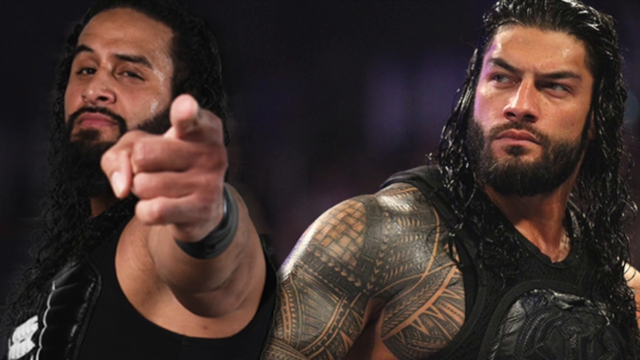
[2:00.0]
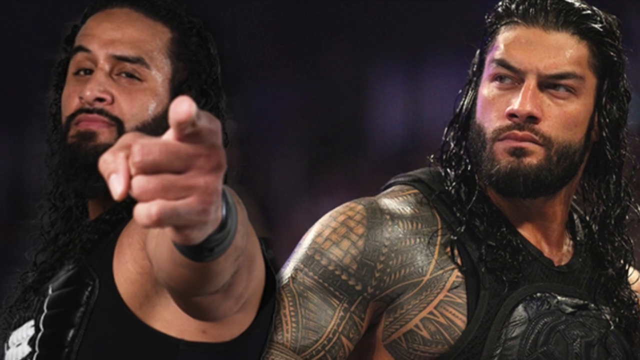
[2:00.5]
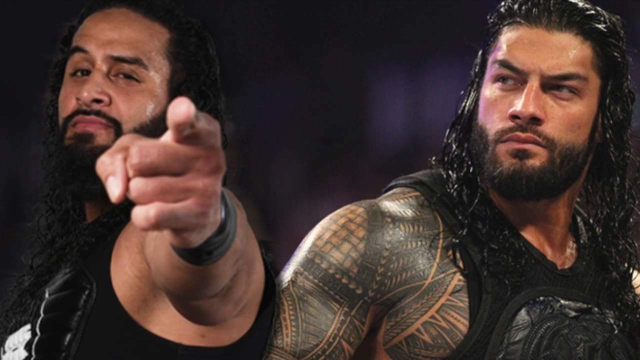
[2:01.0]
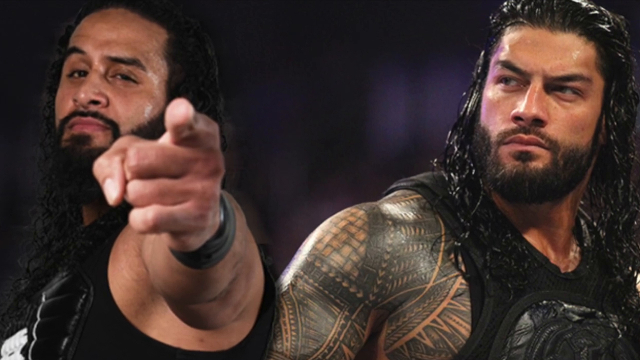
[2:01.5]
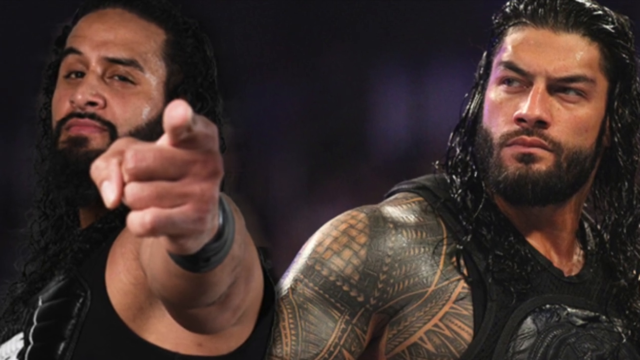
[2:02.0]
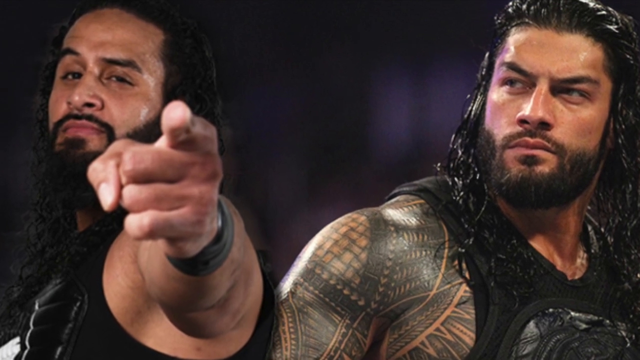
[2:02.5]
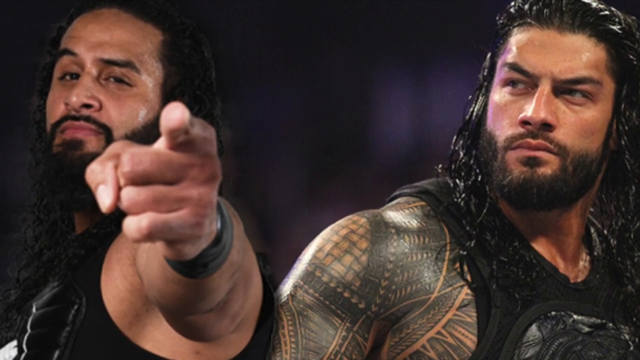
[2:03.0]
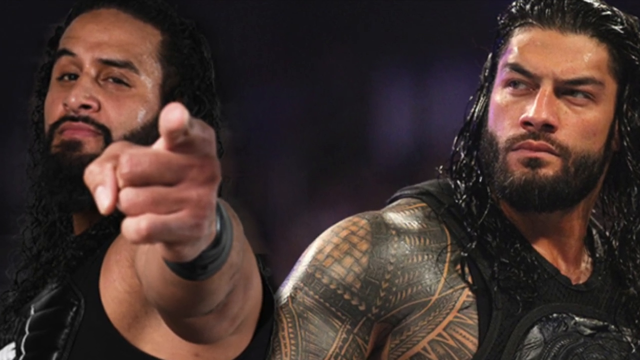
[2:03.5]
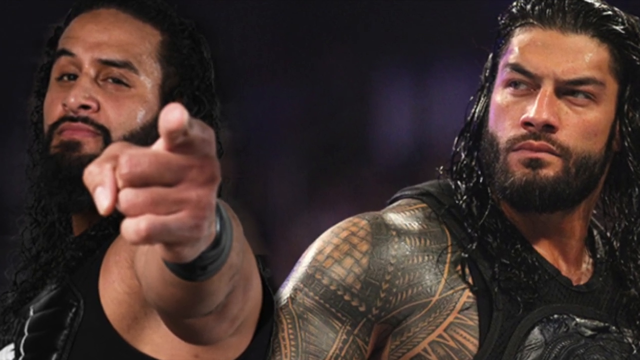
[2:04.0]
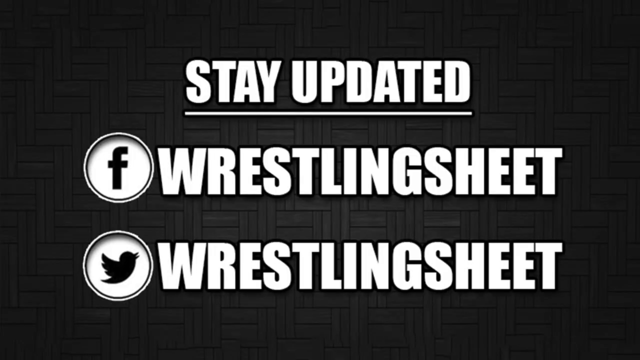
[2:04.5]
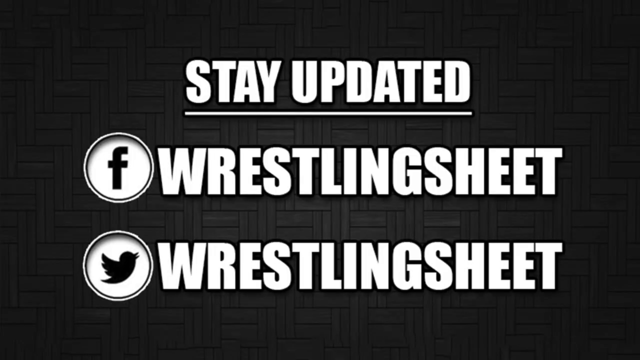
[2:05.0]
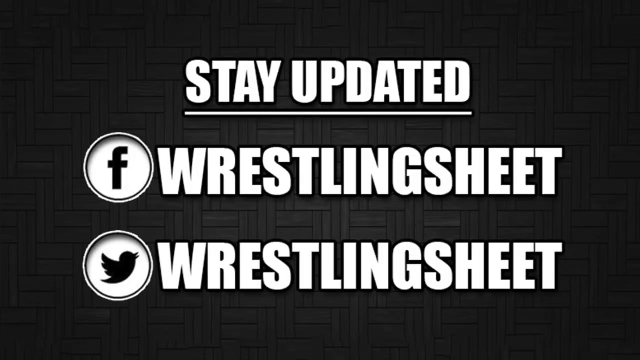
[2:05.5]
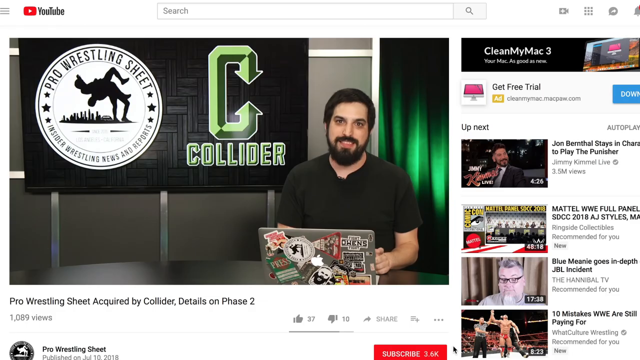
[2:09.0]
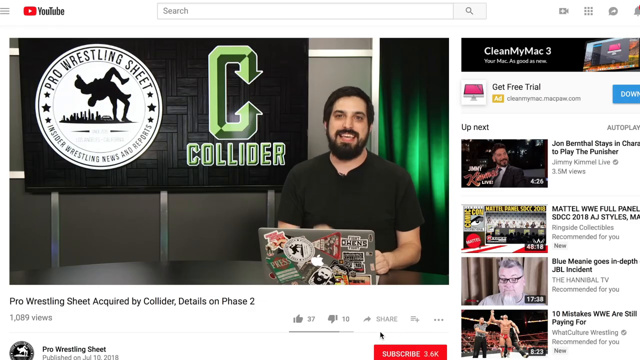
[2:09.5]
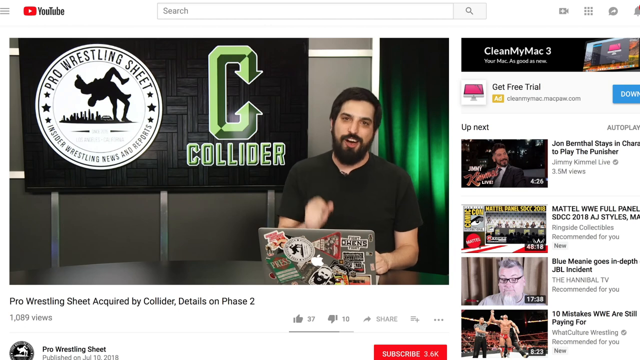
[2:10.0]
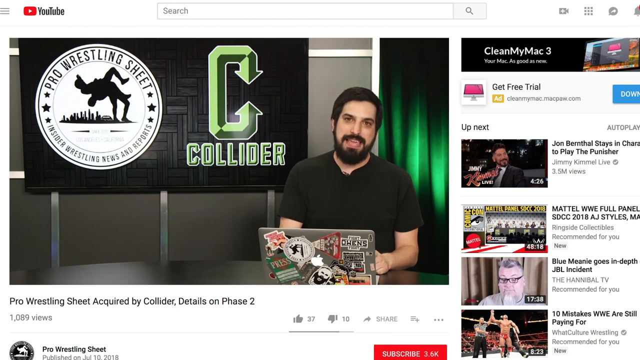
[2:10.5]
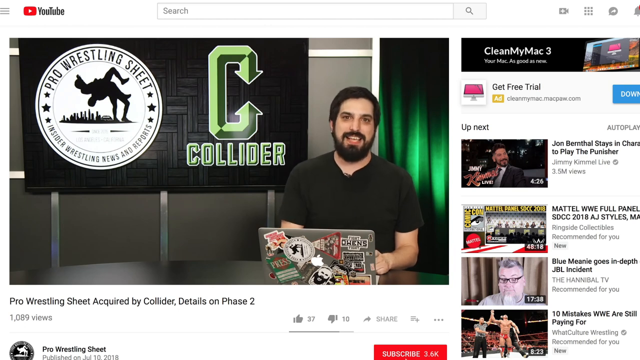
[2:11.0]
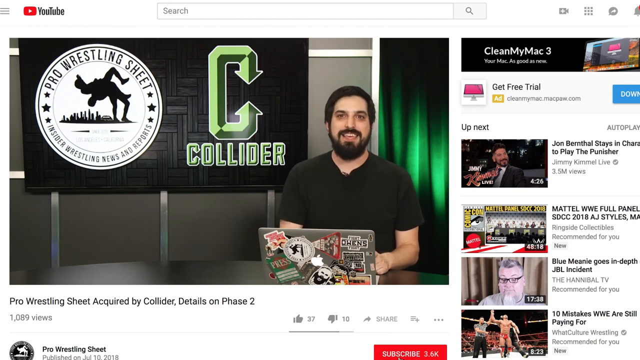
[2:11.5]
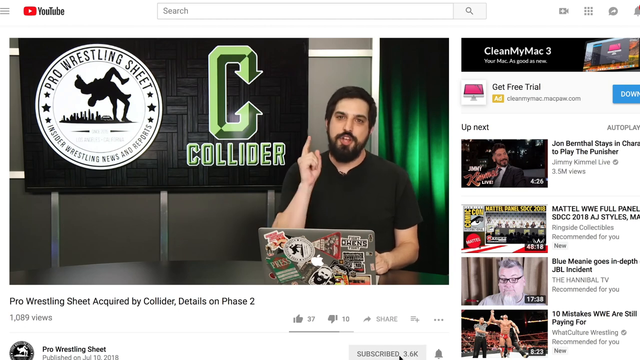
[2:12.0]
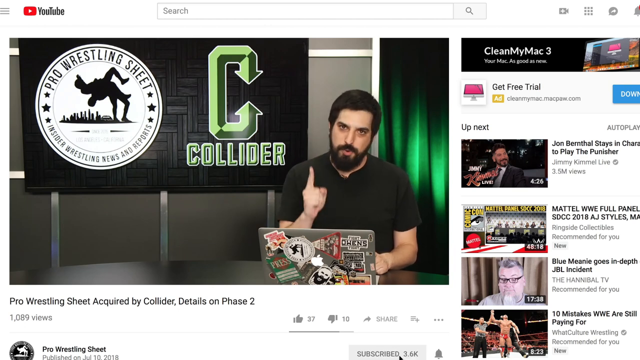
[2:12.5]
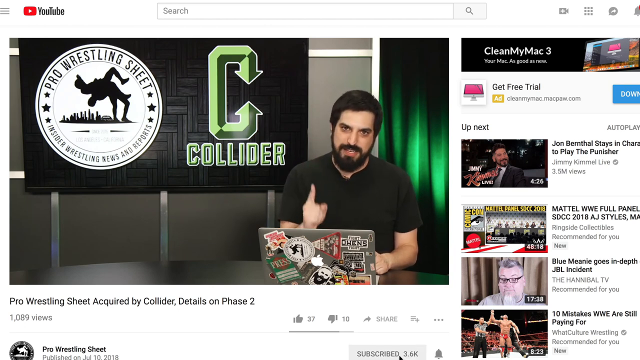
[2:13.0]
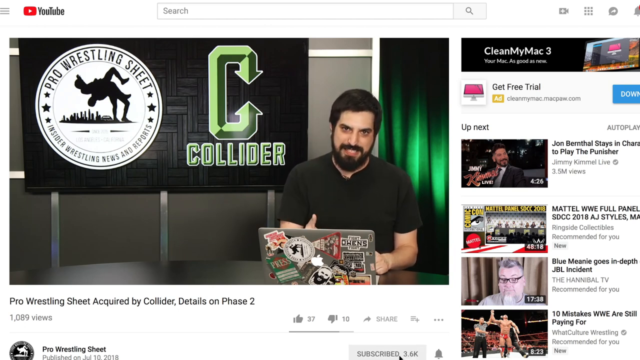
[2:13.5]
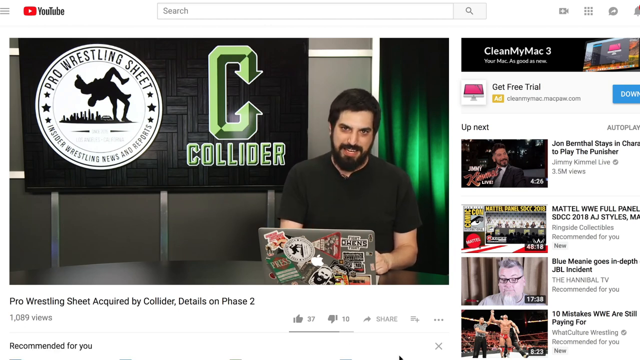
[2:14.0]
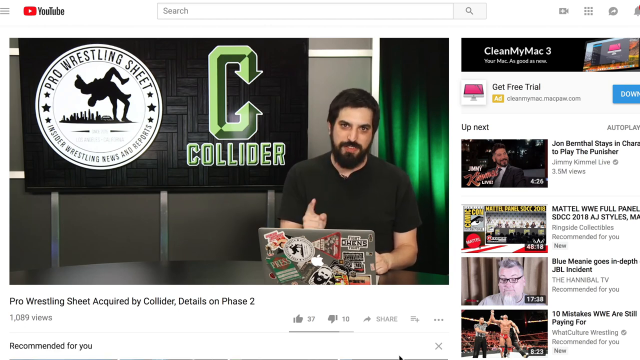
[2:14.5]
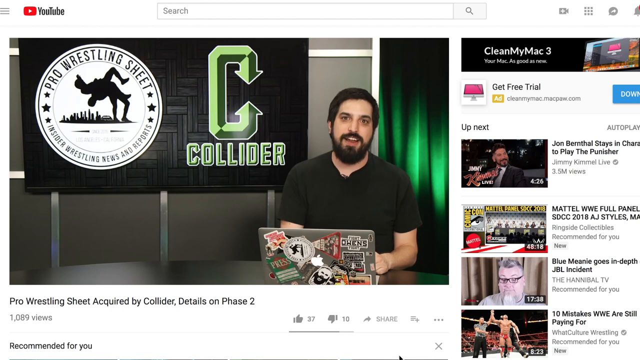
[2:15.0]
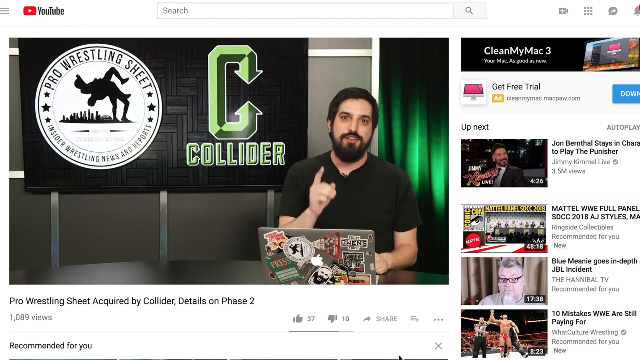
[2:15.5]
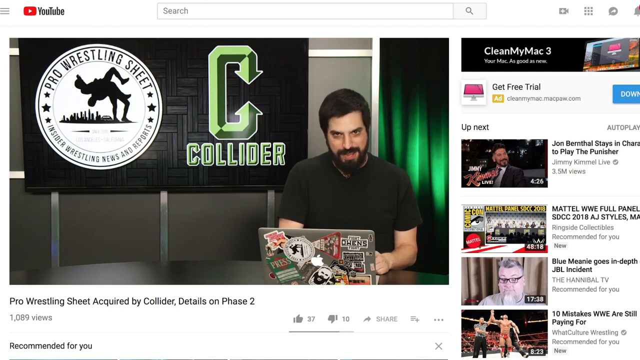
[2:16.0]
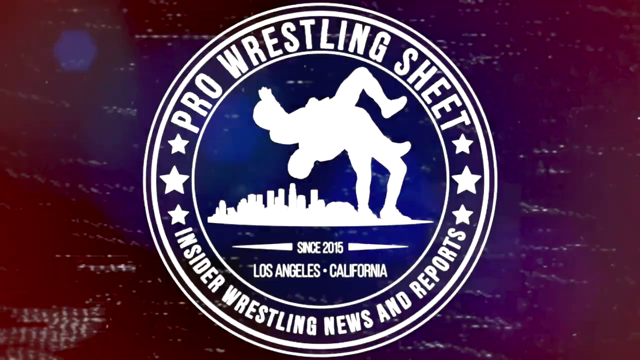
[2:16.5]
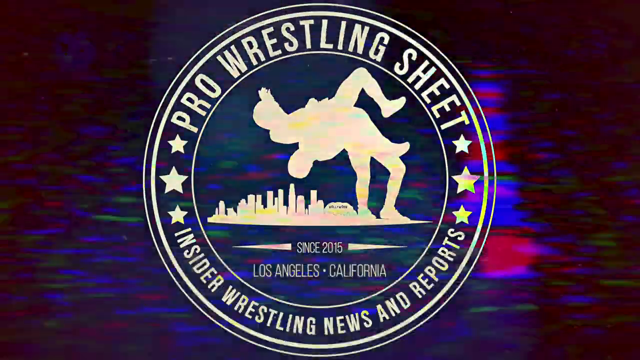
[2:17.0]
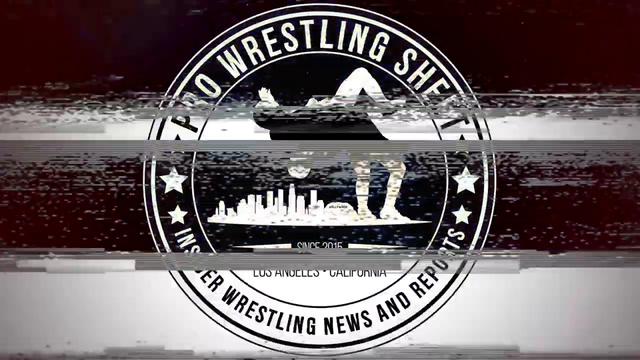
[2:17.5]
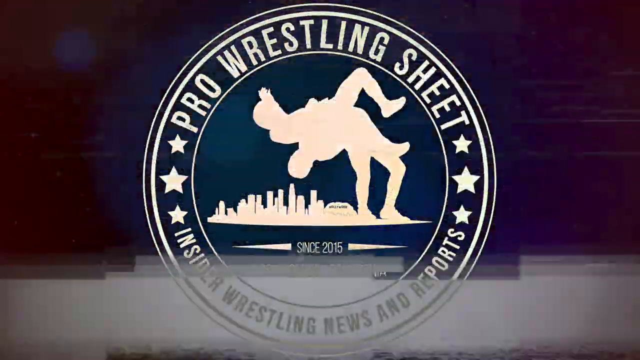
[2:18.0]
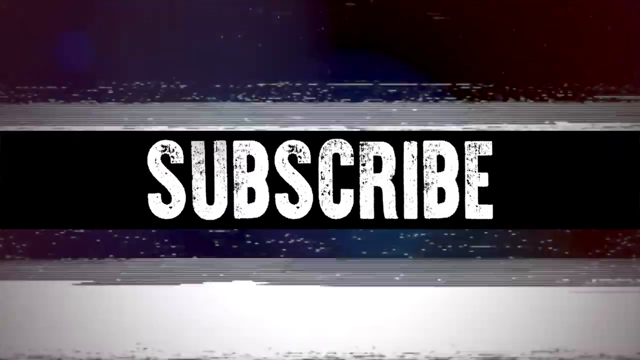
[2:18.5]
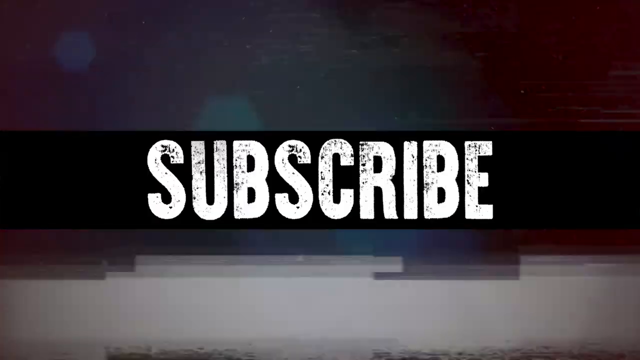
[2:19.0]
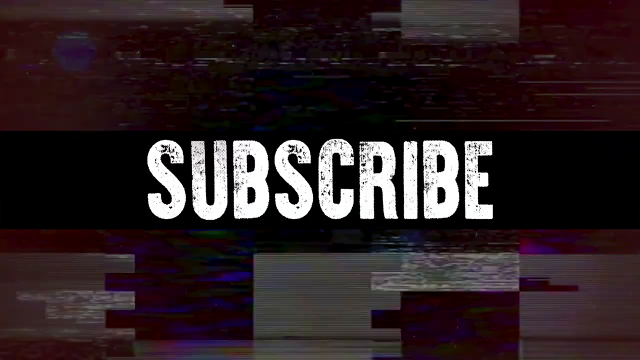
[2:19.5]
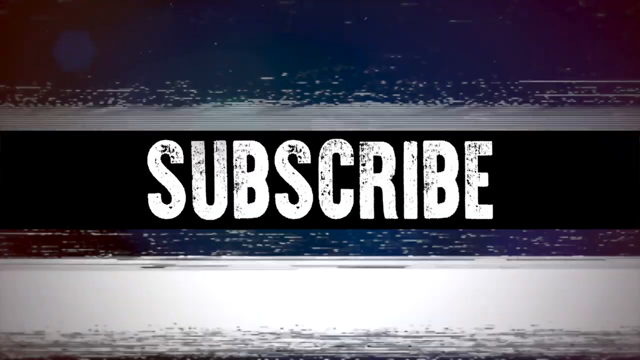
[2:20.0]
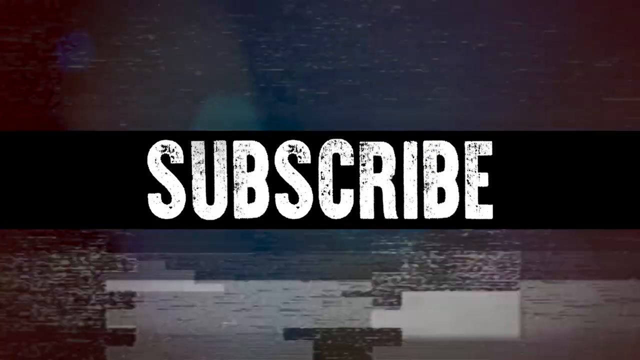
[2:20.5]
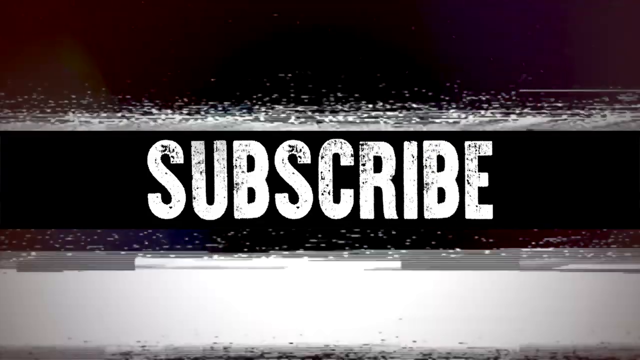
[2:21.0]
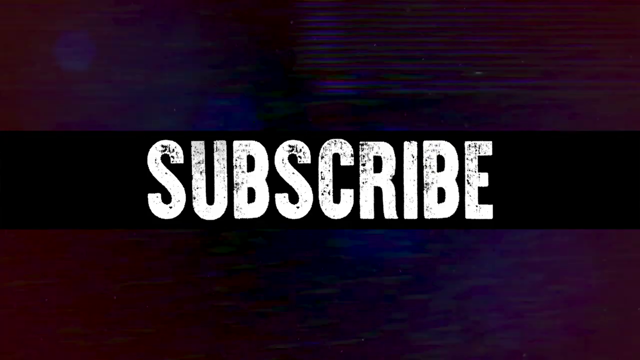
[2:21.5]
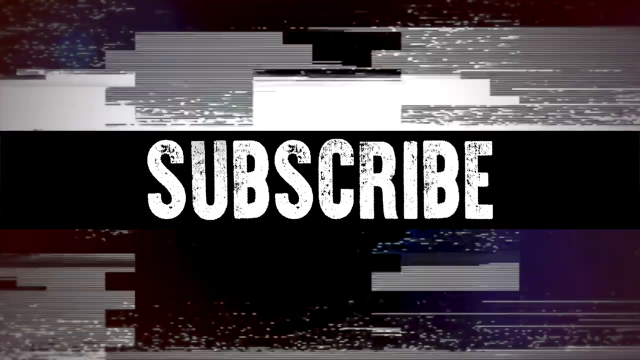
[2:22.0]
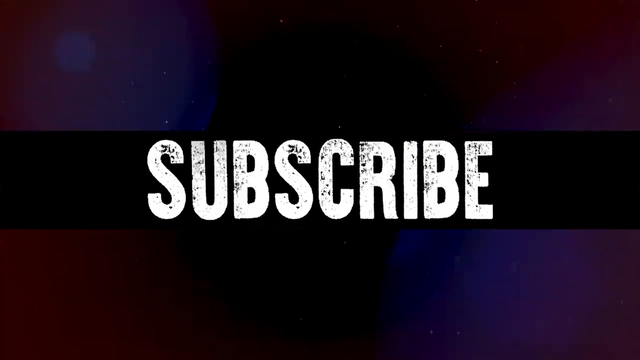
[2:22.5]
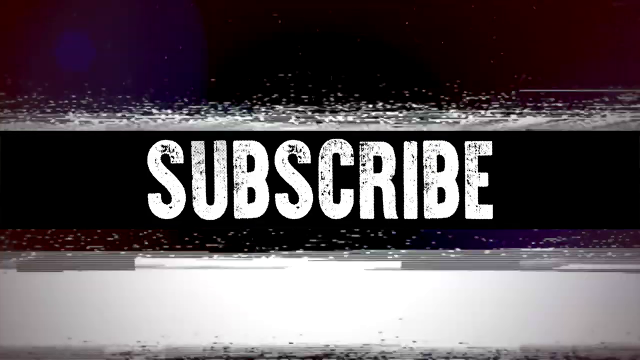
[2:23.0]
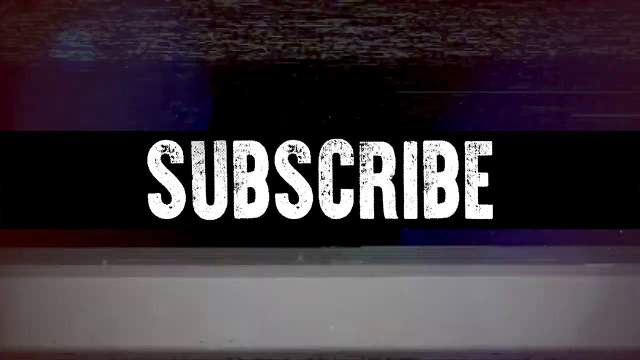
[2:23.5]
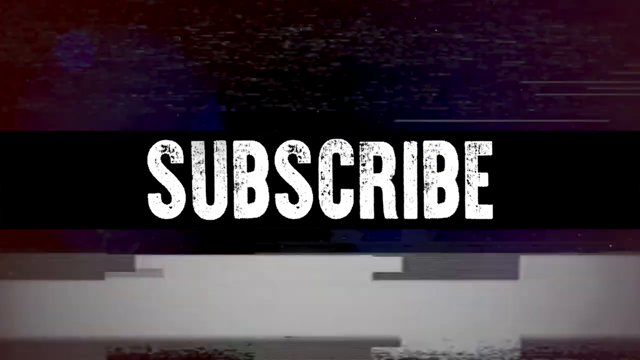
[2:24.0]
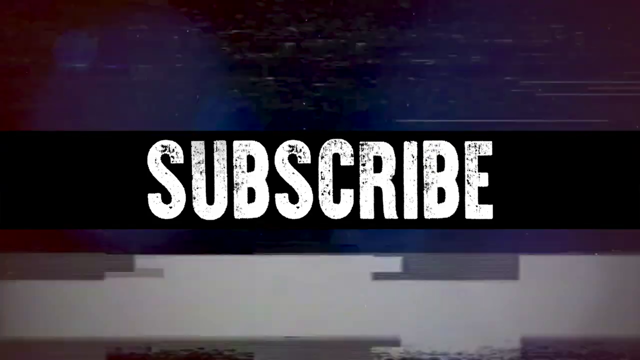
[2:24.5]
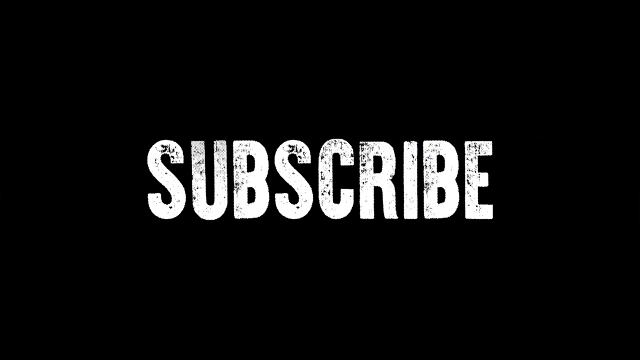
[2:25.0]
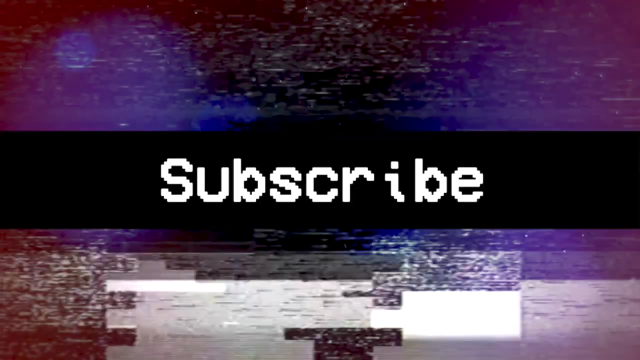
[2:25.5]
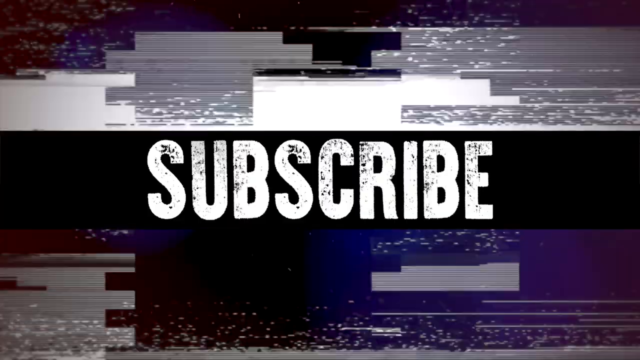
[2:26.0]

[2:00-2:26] A picture shows a guy pointing at the camera, with another guy on the right side of the screen who looks like he might be the same guy from a different angle. Both have long, curly hair and black beards, and the one on the right has a tattoo covering his whole shoulder. The camera starts to zoom in on him. The video cuts to a slide with white text that says "stay updated". On the left side is a Facebook logo with "wrestling sheet", and underneath is a Twitter logo with "wrestling sheet"; the background is kind of a grayish color. The view seems to zoom out to a guy with a short black beard and short hair talking to the camera. In front of him is a laptop covered in stickers on the back, on a counter that is kind of gray. He points at the camera with his right index finger as he continues talking.